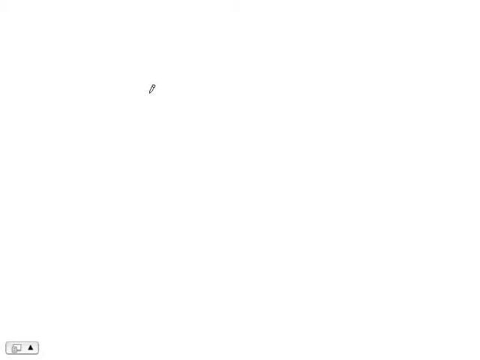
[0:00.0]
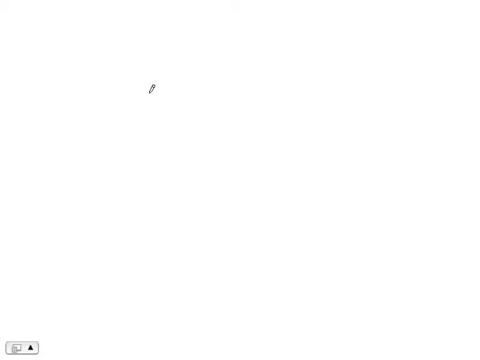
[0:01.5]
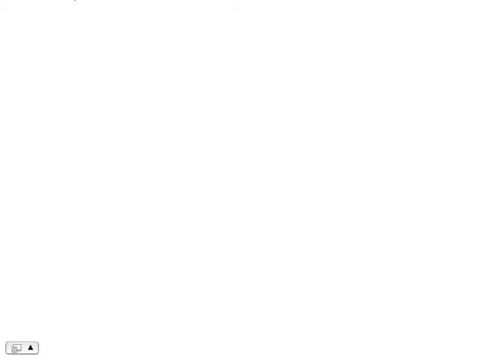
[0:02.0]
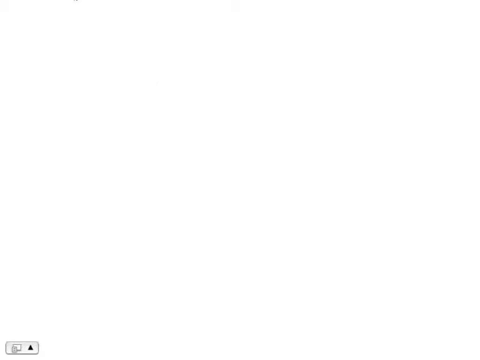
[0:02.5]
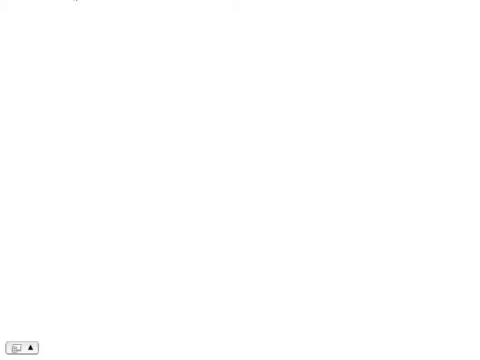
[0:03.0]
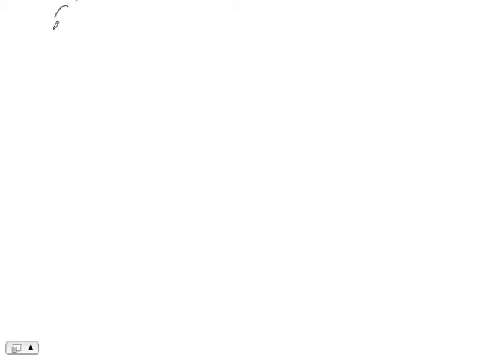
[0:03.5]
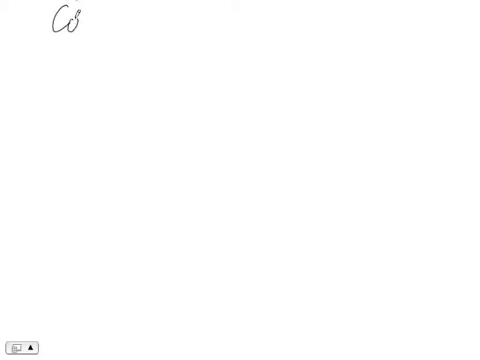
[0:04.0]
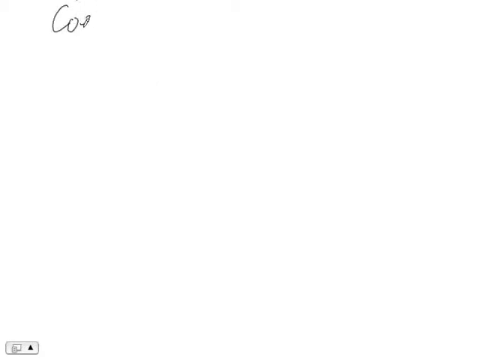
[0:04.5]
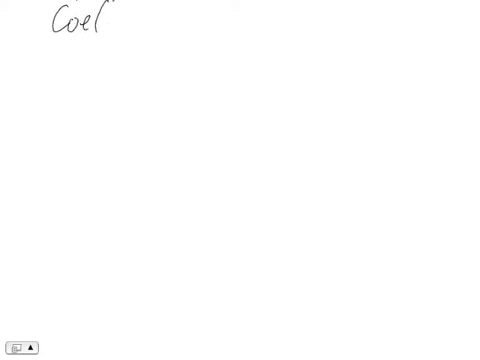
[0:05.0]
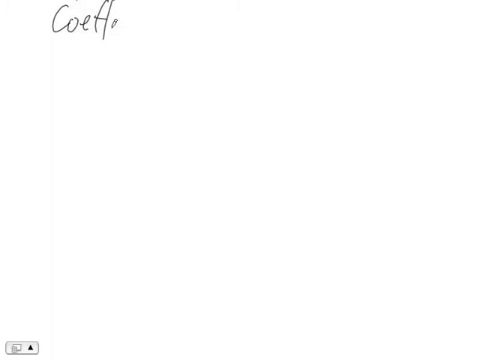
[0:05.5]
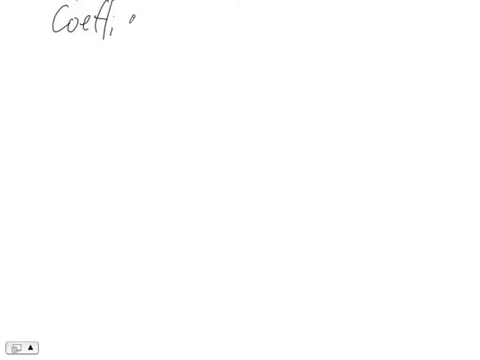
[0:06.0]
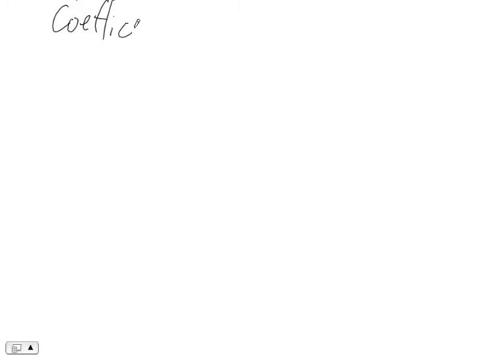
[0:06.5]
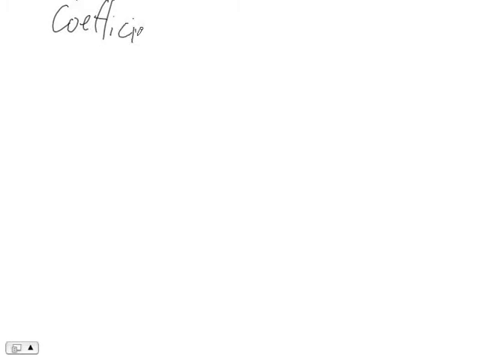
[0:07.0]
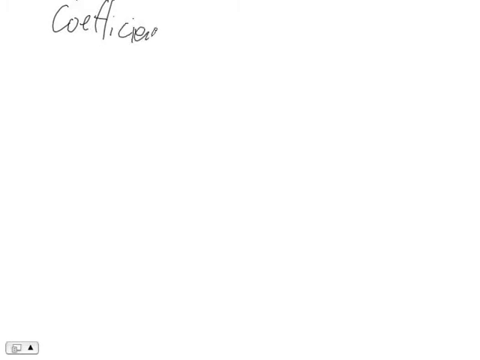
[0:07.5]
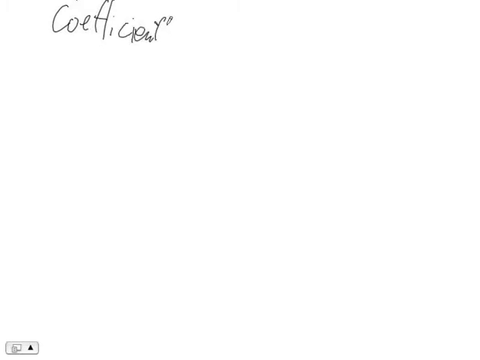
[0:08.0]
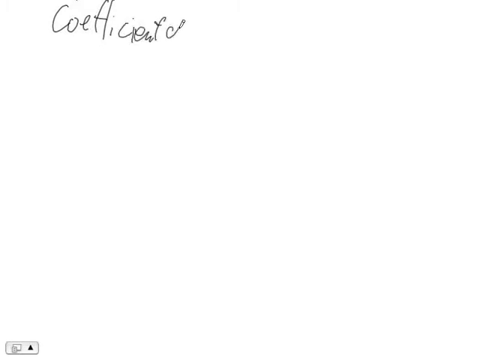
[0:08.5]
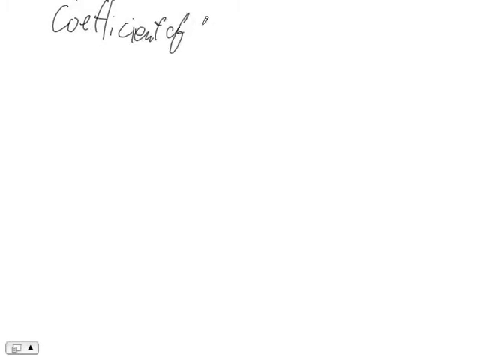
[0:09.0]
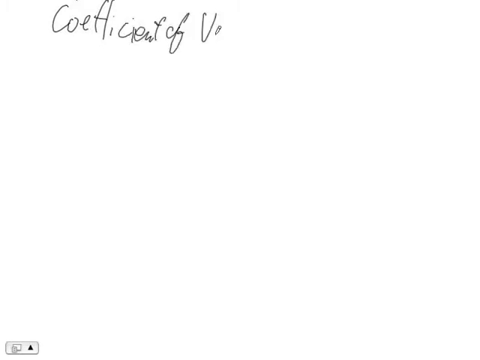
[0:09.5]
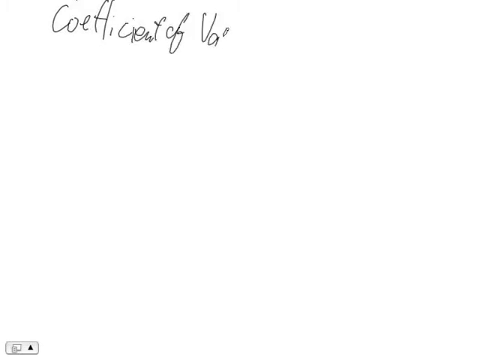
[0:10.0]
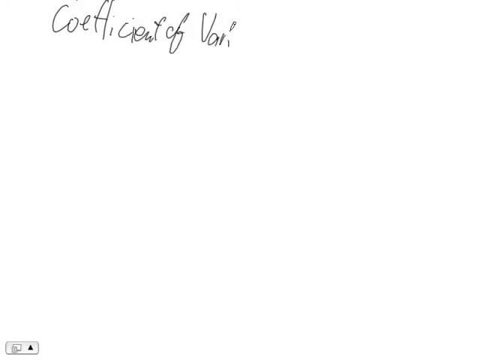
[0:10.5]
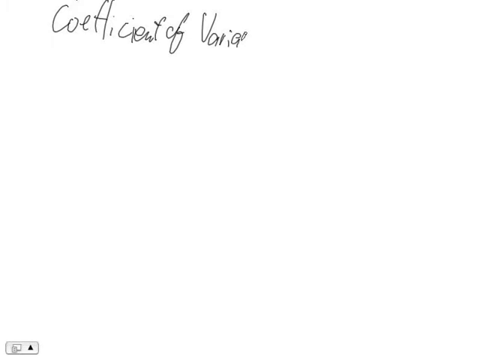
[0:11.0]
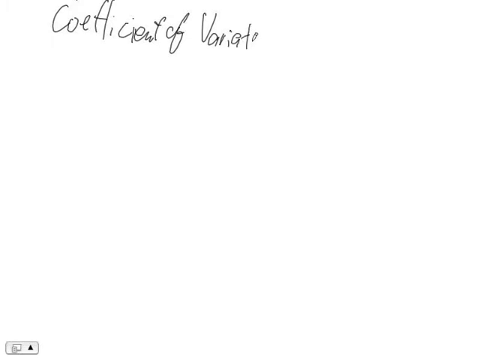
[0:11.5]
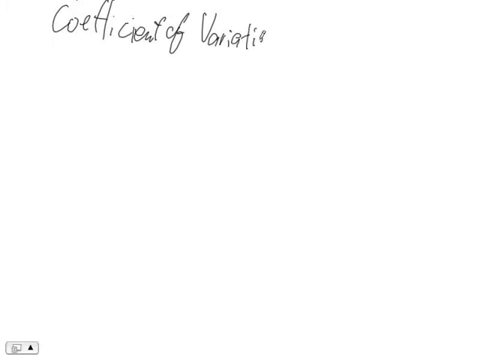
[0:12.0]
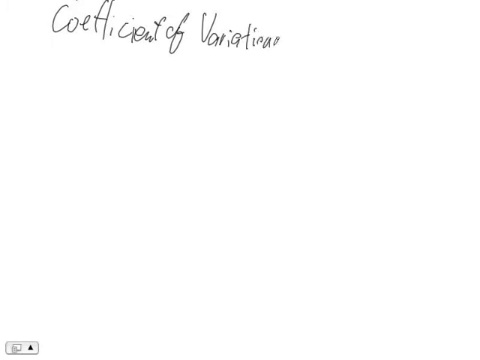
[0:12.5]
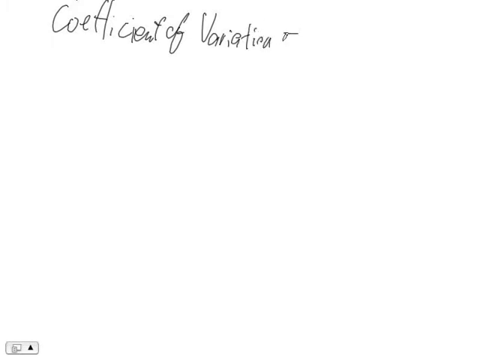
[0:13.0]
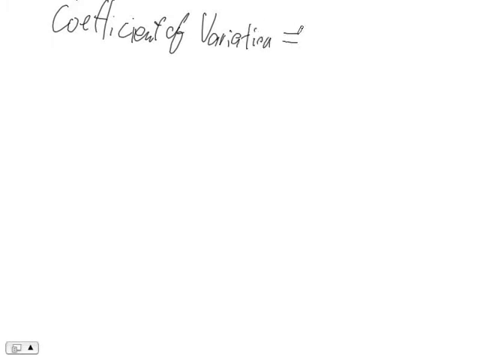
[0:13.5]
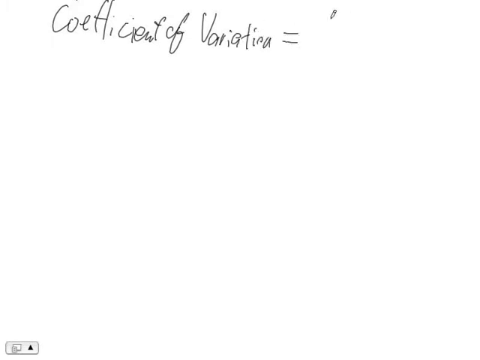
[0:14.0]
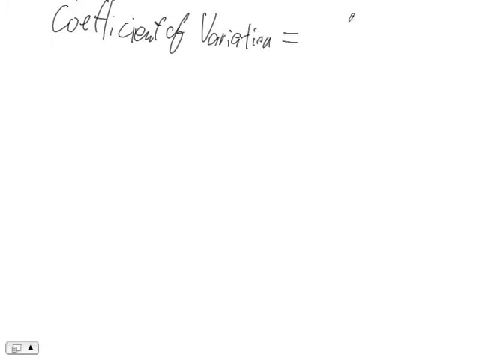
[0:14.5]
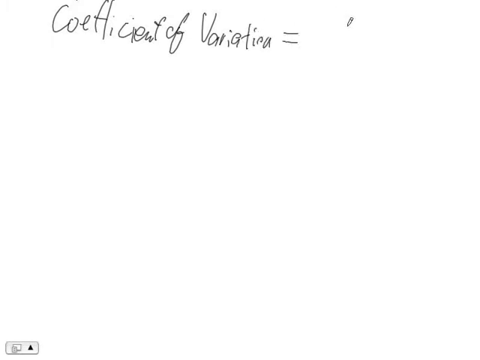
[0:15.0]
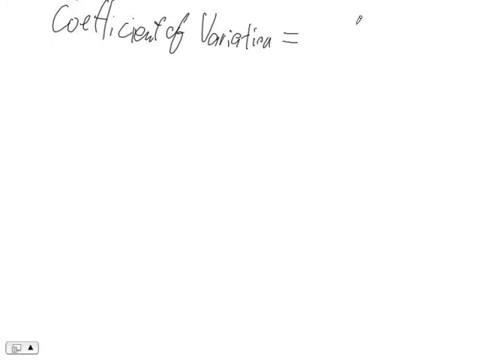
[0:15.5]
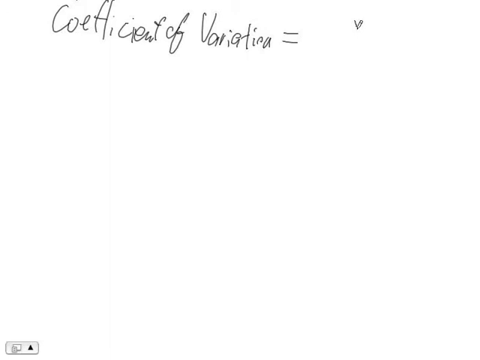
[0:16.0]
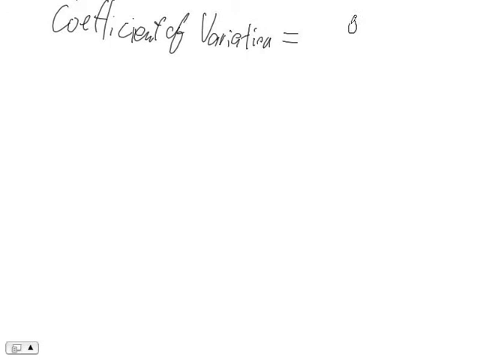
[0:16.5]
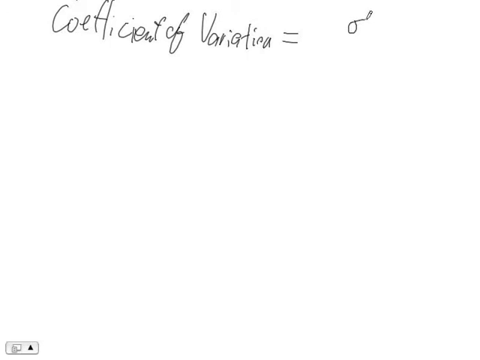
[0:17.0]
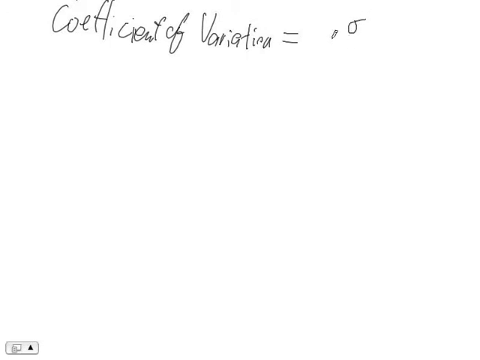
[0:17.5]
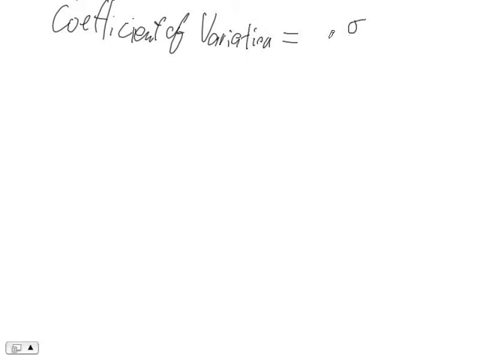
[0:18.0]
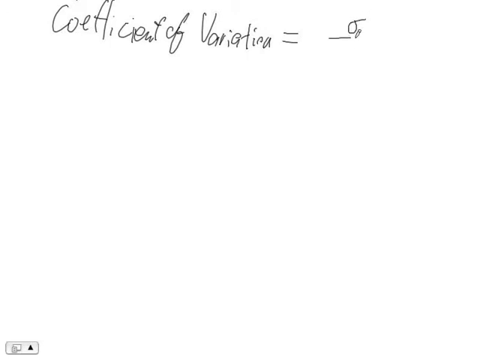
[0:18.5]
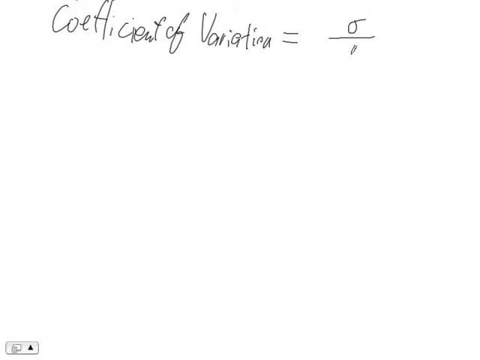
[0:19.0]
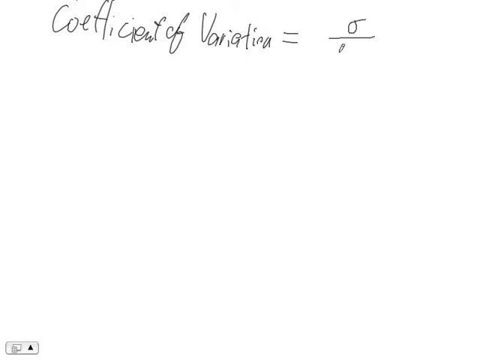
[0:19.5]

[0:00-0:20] A blank page is shown on a computer, with a pencil-like pointer controlled by a person. A formula shows the coefficient of variation as equal to one quantity divided by another. It seems to be a tutorial, apparently teaching learners how to apply this formula.